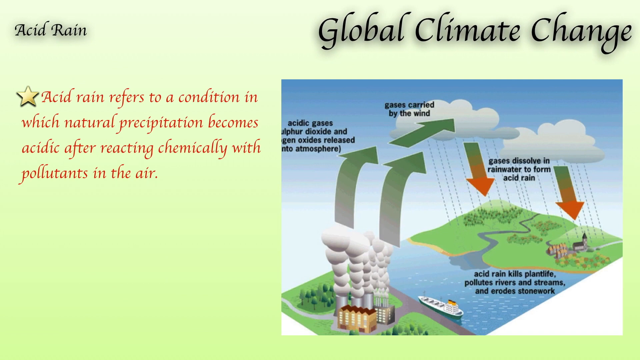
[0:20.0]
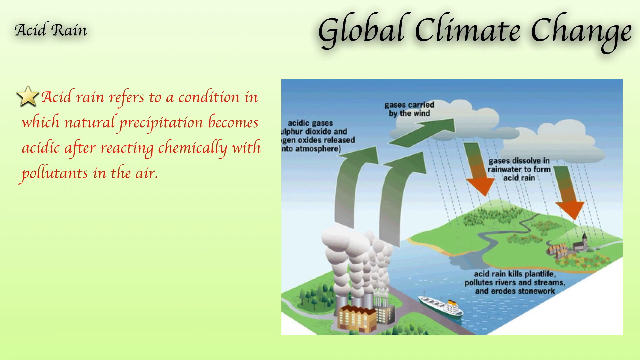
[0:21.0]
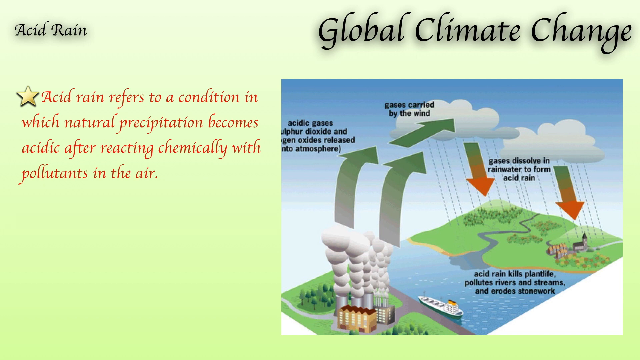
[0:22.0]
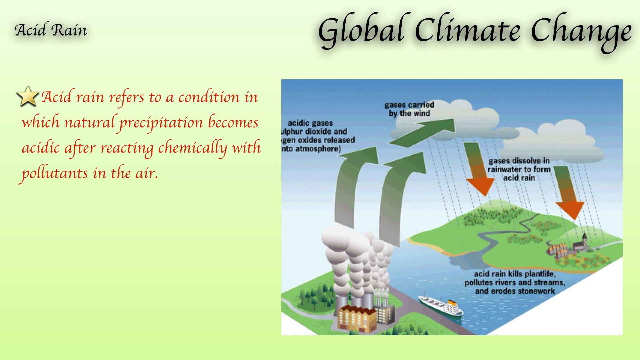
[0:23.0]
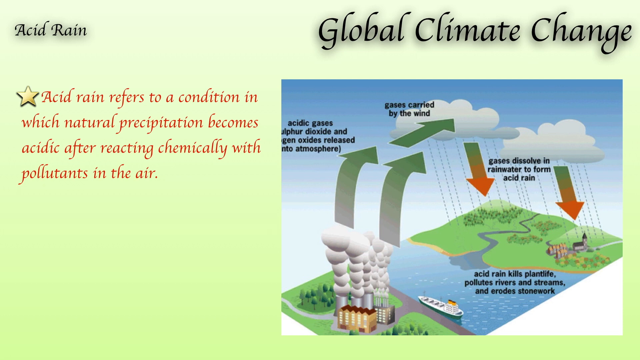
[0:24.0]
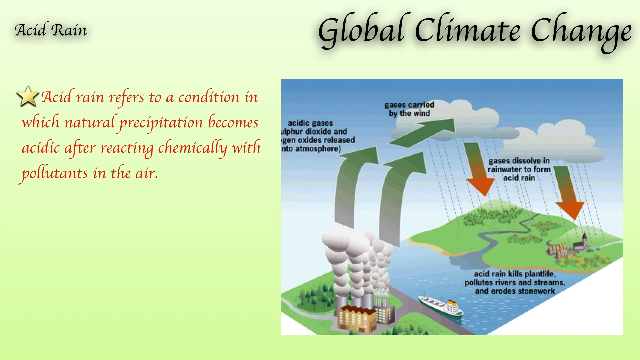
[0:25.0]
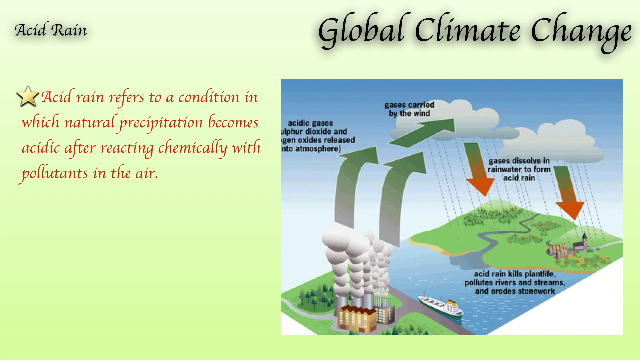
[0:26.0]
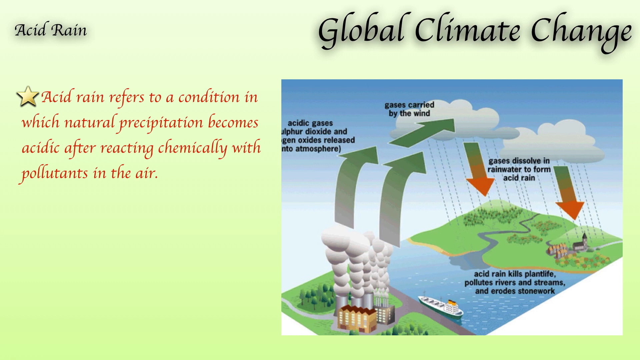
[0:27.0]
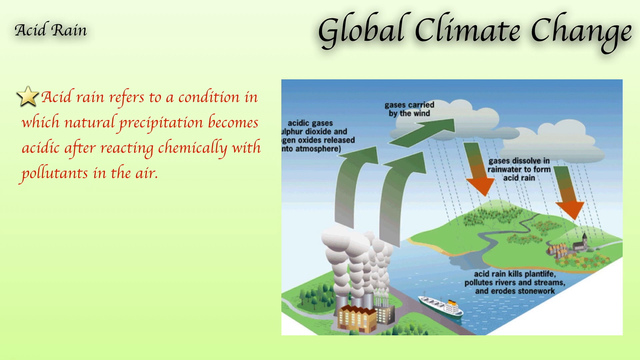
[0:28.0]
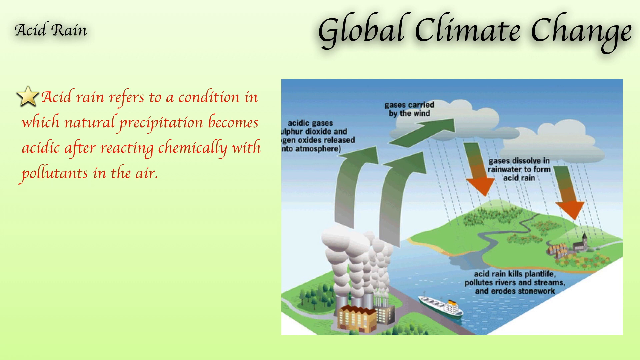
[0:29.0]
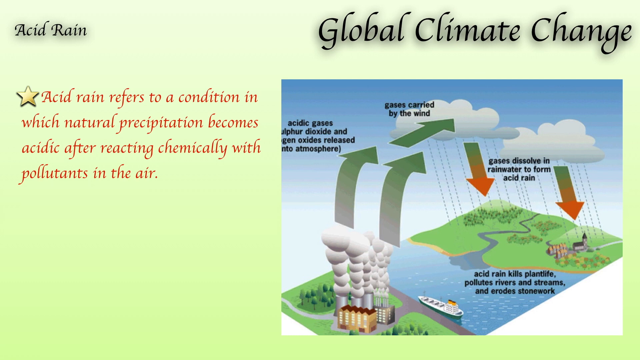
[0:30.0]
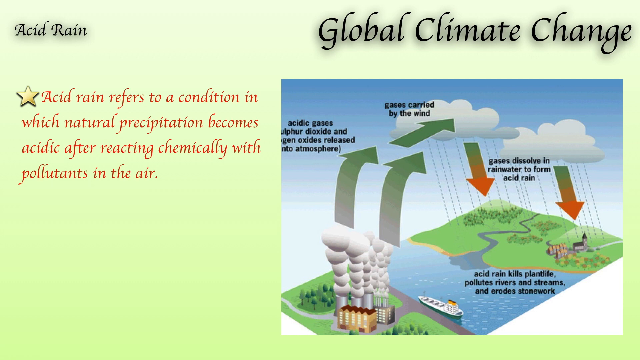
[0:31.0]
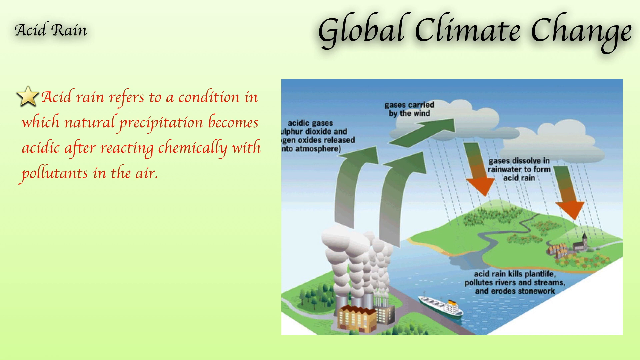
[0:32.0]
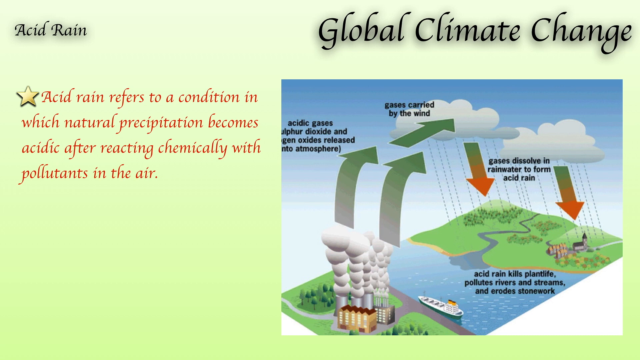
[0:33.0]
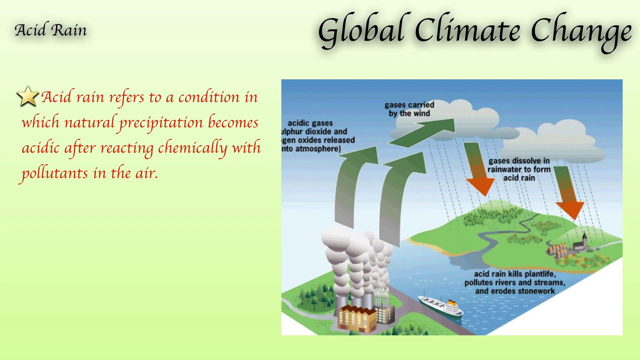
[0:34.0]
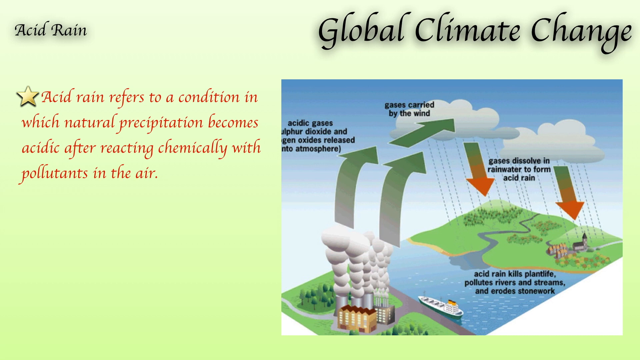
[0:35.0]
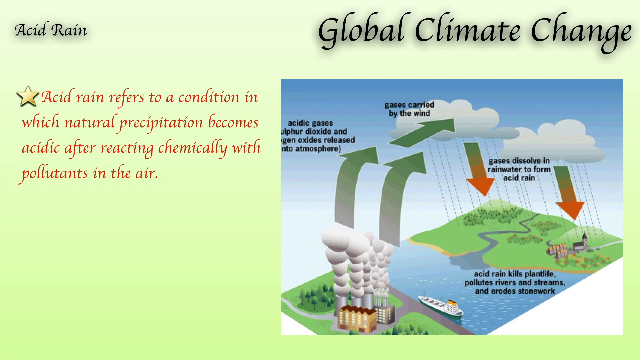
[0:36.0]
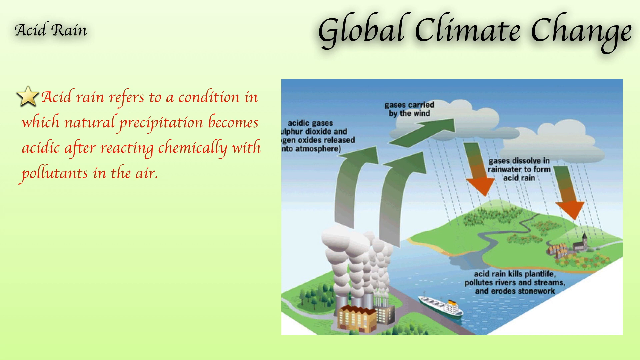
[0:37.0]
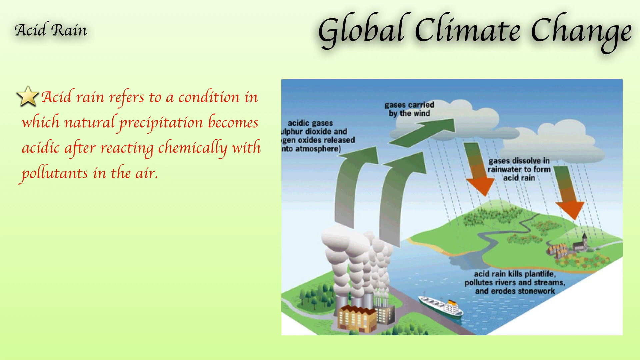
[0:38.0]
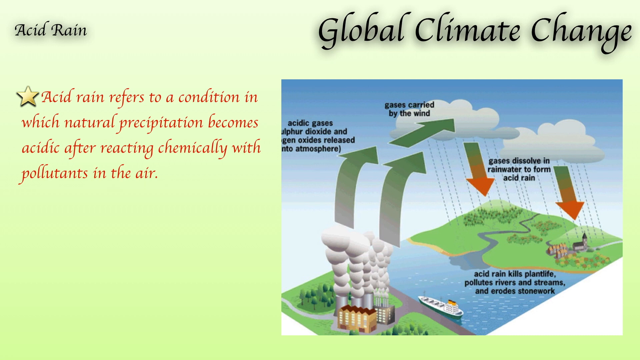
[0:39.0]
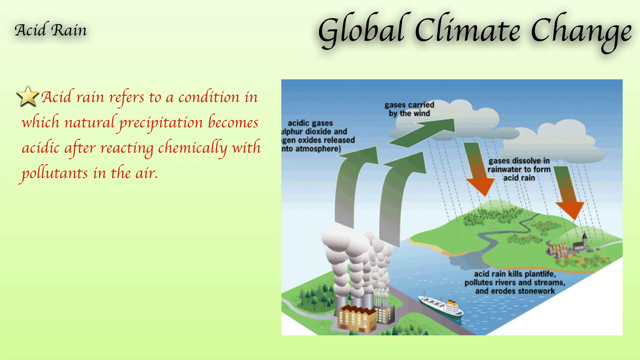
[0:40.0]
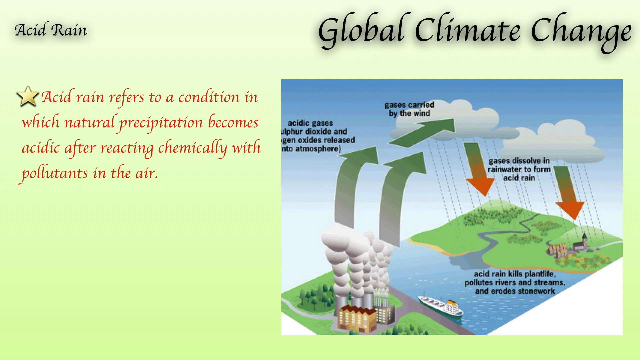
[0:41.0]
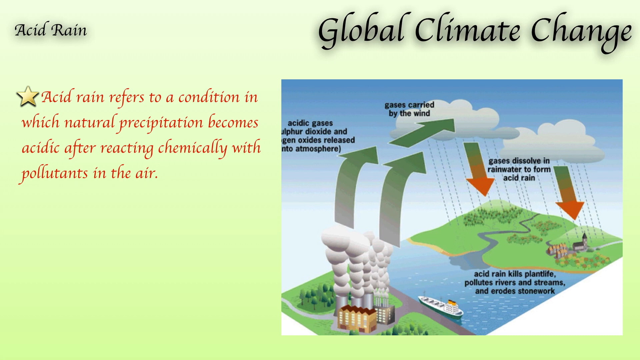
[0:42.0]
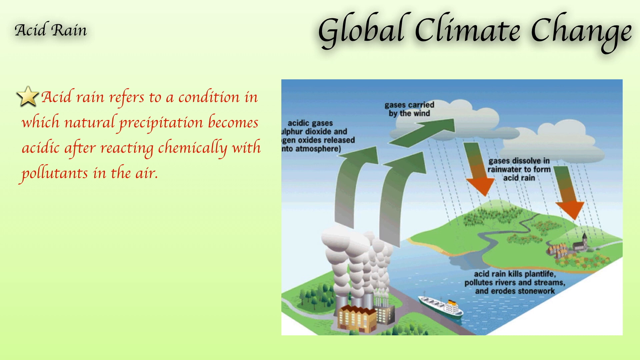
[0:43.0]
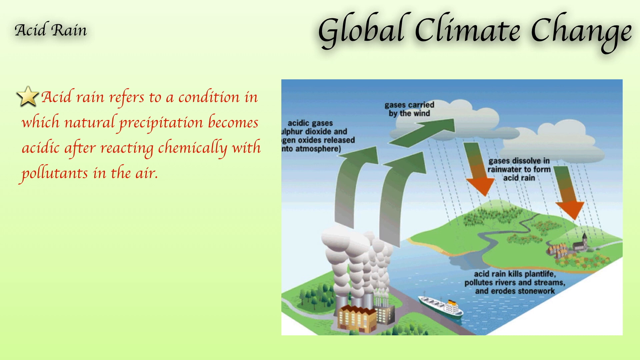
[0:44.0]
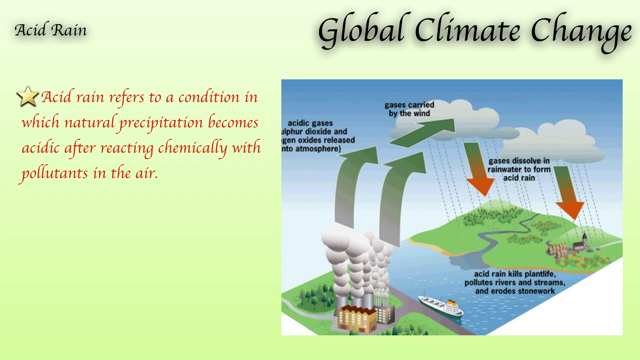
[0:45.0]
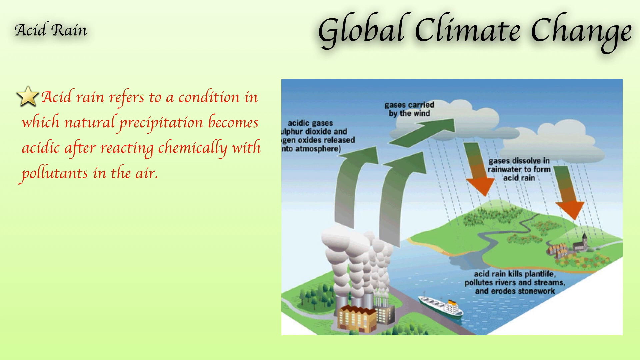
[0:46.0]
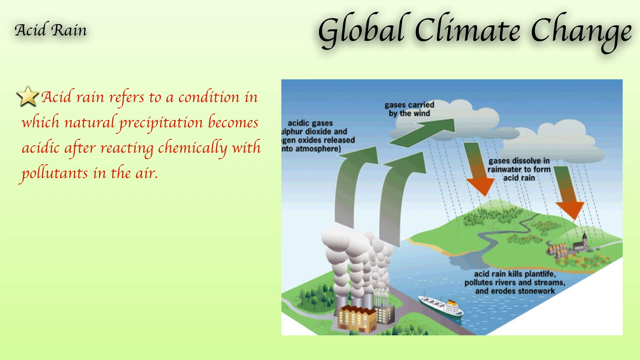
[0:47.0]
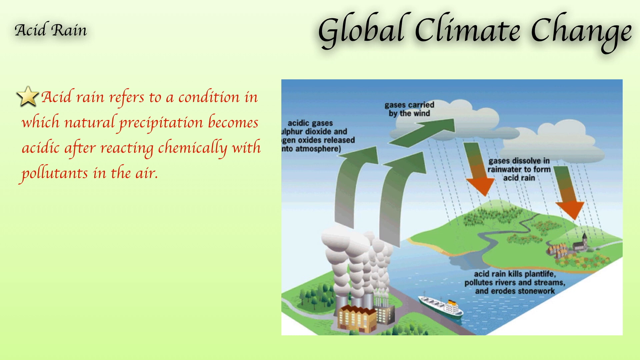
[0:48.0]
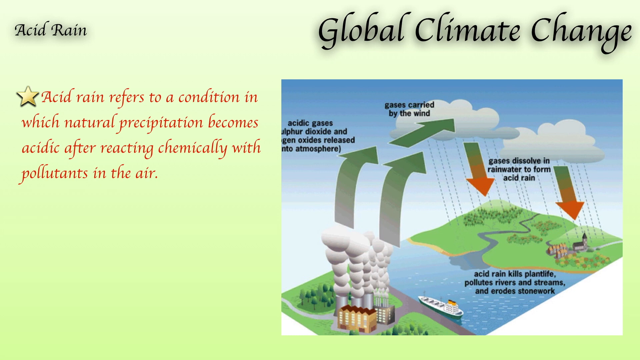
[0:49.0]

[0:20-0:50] On the acid rain page, "global climate change" remains on the top right in black text from the previous slide. On the top left, "acid rain" appears in smaller black text. Beneath it is a definition in red, preceded by a gold star, beginning "acid rain refers to a condition in which". On the right side of the screen, underneath the global climate change text, is a visual explaining acid rain with images and text. It first shows a power plant or other manufacturing facility with arrows going up into the air, with text reading "acidic gases, sulfurs,". Next it mentions being carried in the wind, with another green arrow pointing toward the clouds. Finally, the clouds have arrows pointing down with rain, and text says "gases dissolve in rain water to form acid rain", while the rain pours onto green land. Black text below begins "acid rains kill plant tips" and goes on to mention rivers and stonework.